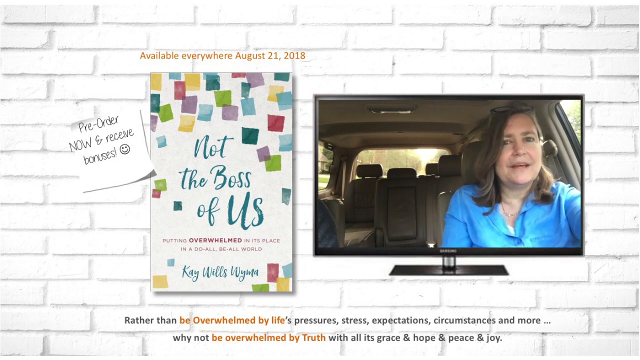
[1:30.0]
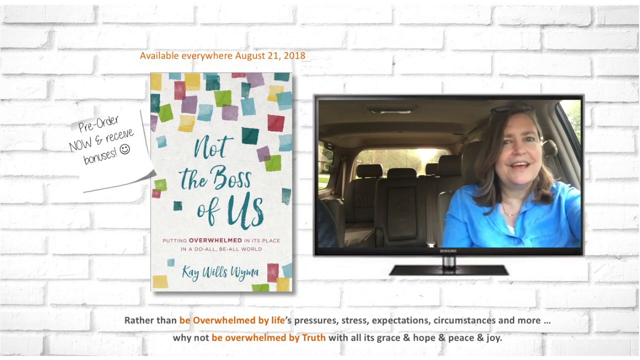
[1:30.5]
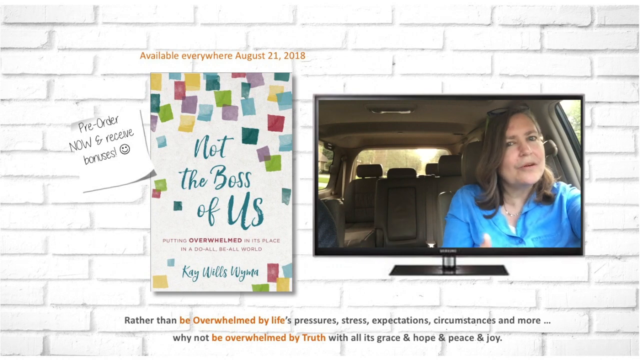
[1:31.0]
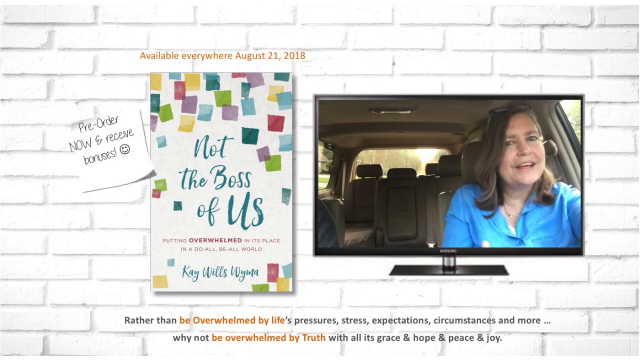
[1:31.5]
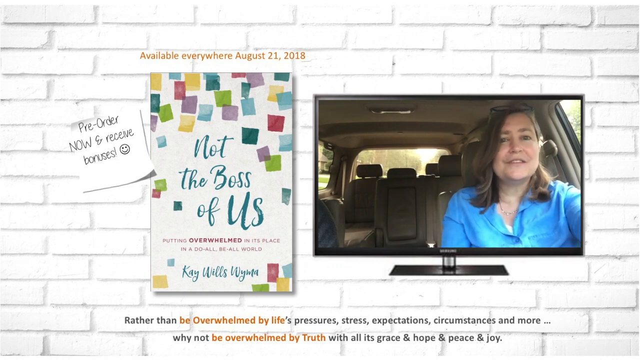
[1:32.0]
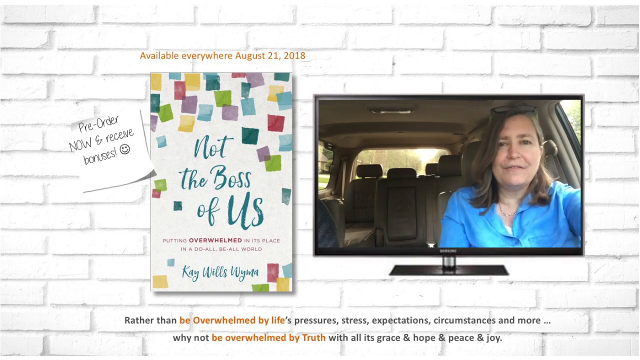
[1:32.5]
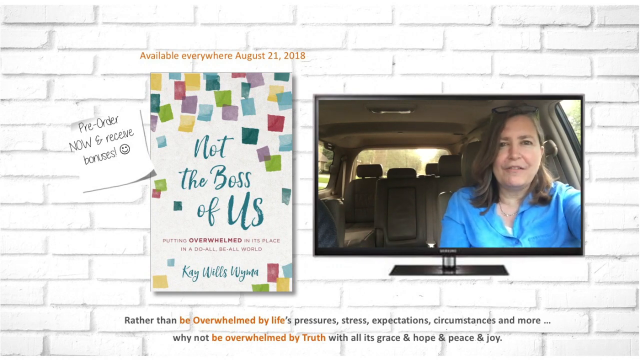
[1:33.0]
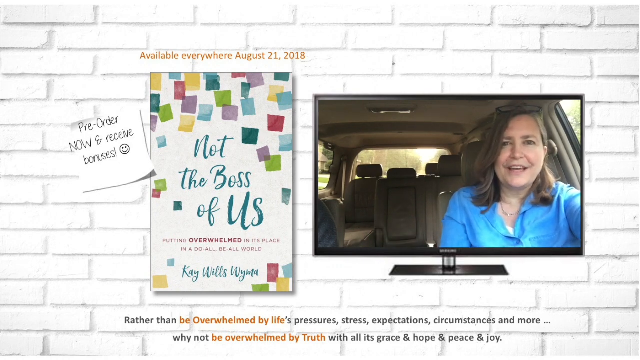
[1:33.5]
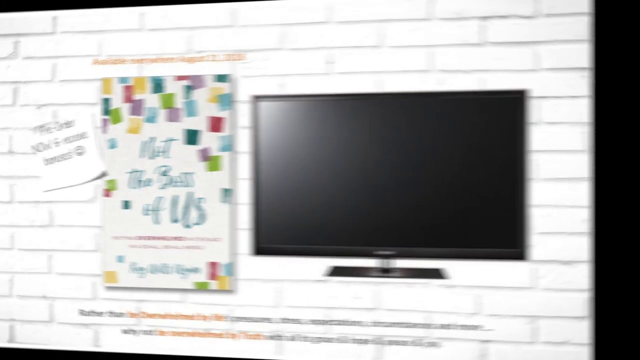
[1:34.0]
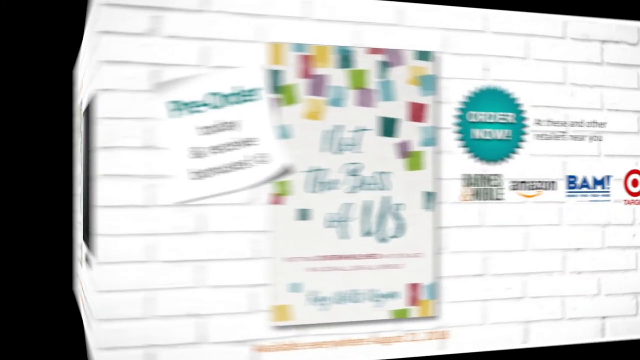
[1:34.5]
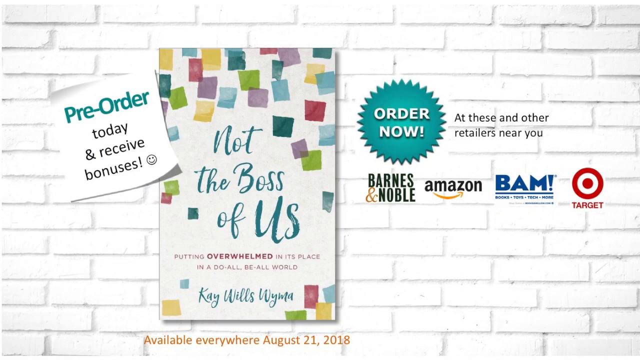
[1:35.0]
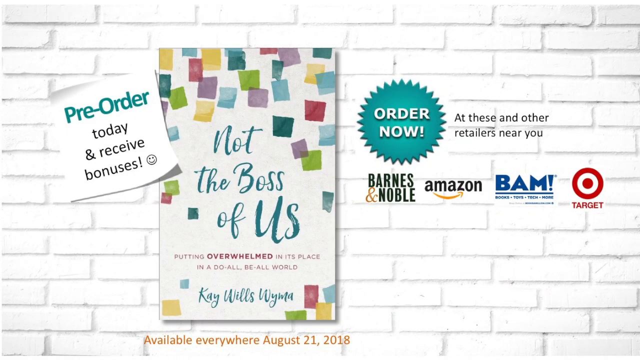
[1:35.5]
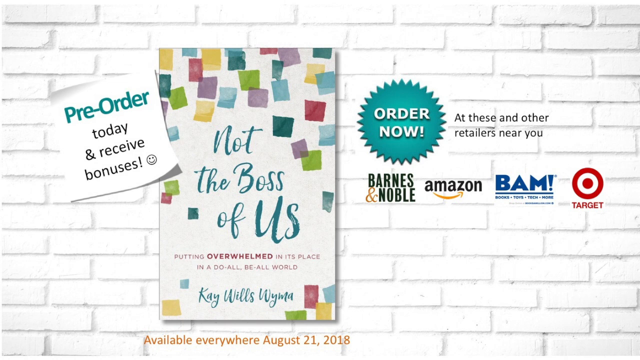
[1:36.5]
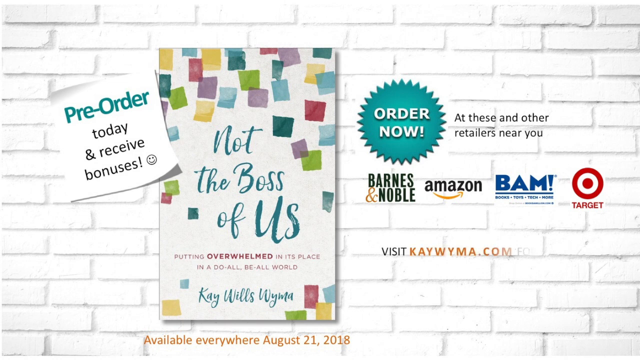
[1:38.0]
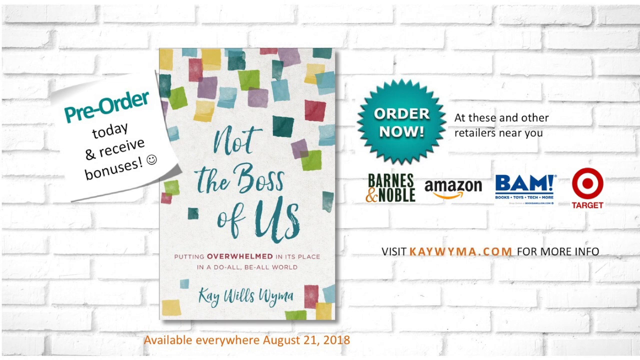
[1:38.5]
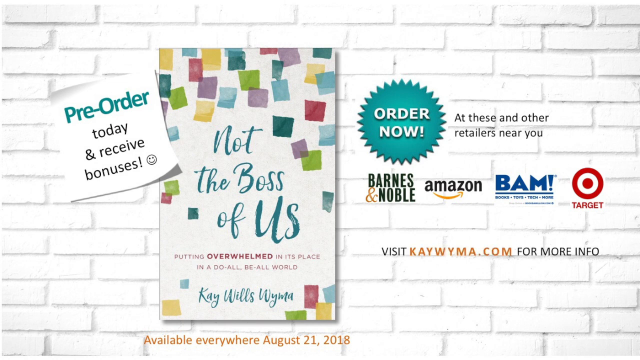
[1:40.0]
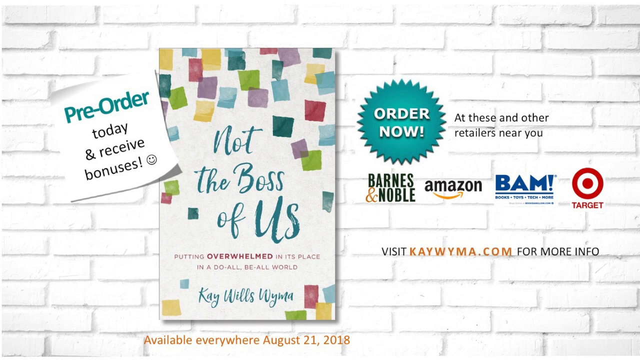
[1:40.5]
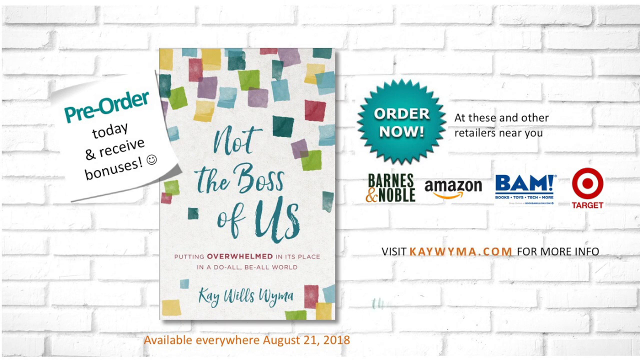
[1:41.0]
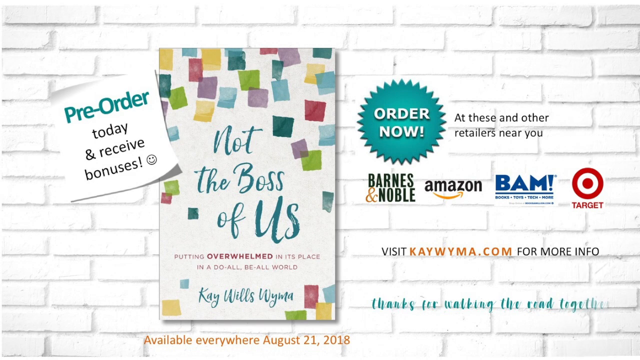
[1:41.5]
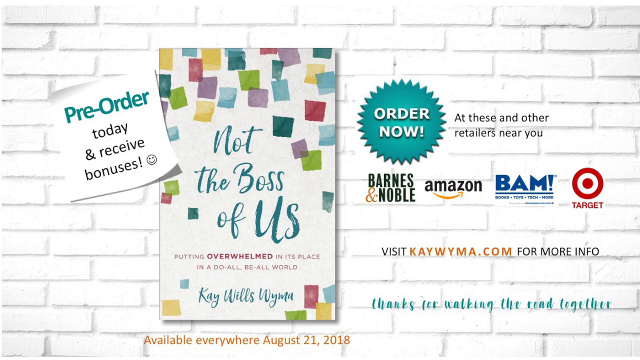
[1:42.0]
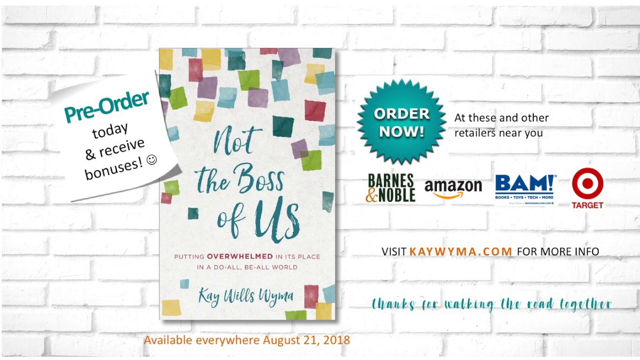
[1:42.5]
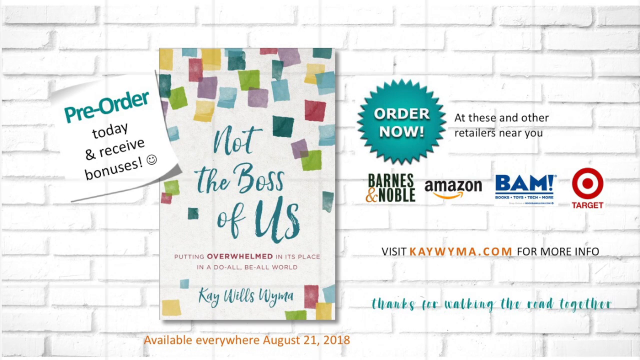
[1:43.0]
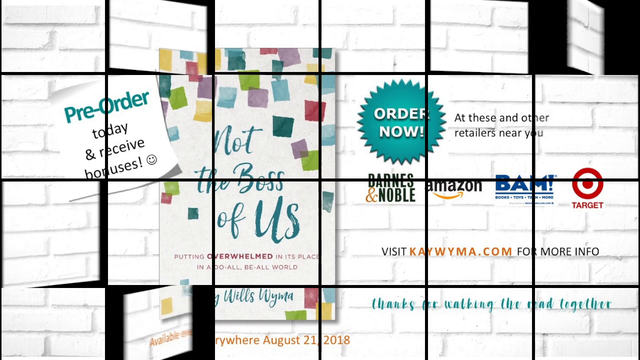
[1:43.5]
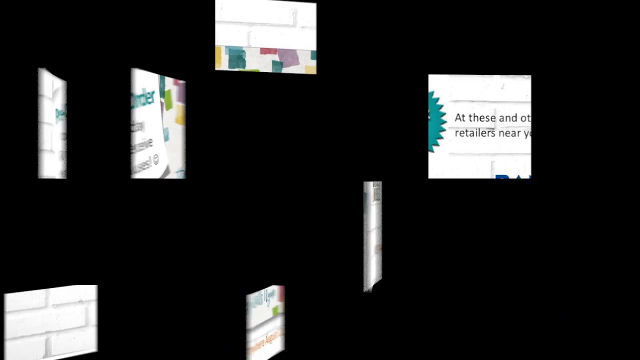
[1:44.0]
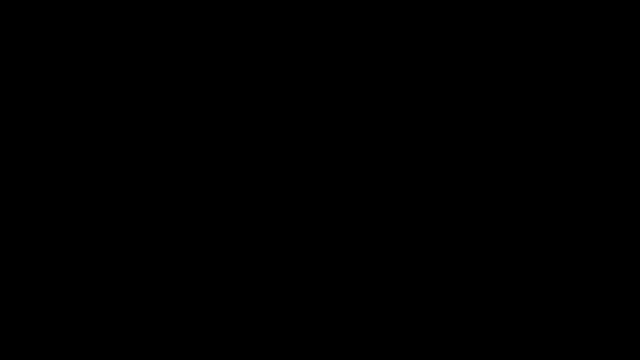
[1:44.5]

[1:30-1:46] The video ends with a clean, simple promotional screen. The book "Not the Boss of Us" is shown again against the white brick wall. Next to it is a bright green "order now", along with logos of stores such as Barnes & Noble and Amazon. A message then encourages viewers to pre-order the book and receive special bonuses, and the author's website is shown. At the bottom of the screen a note fades in saying "thanks for walking the road together".